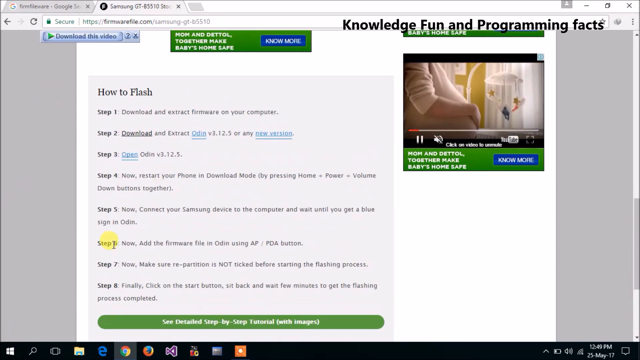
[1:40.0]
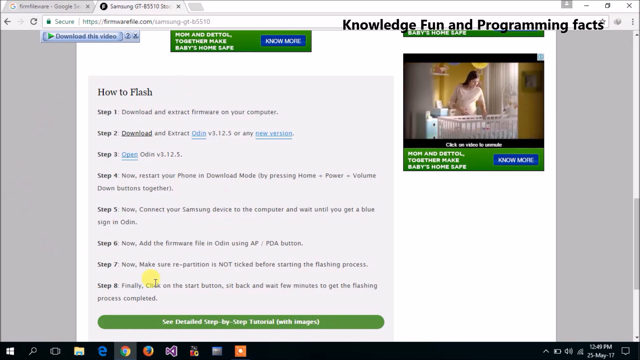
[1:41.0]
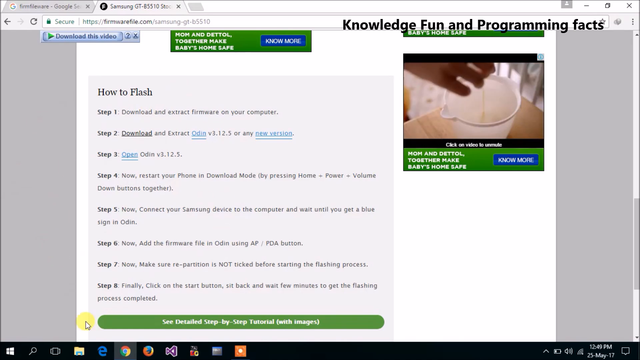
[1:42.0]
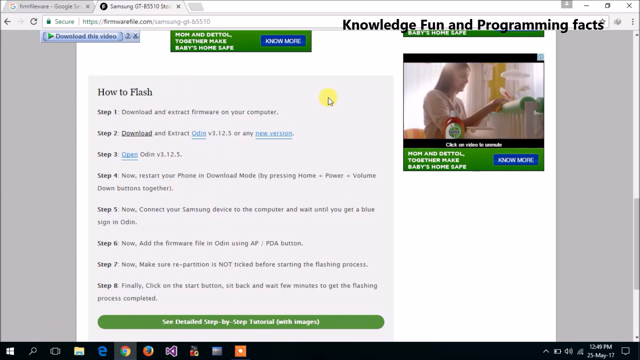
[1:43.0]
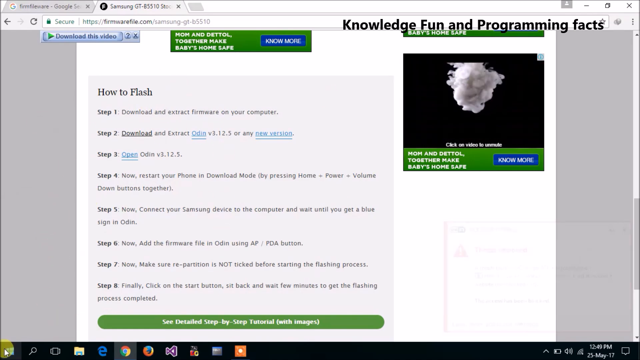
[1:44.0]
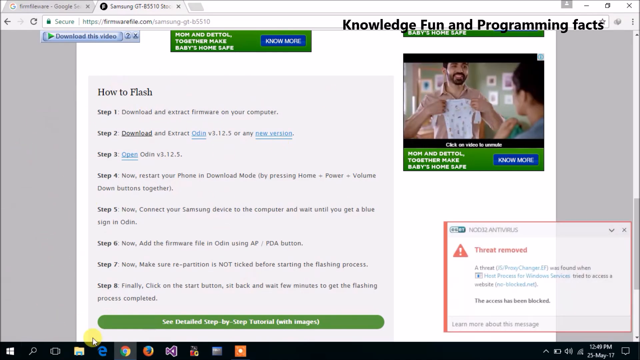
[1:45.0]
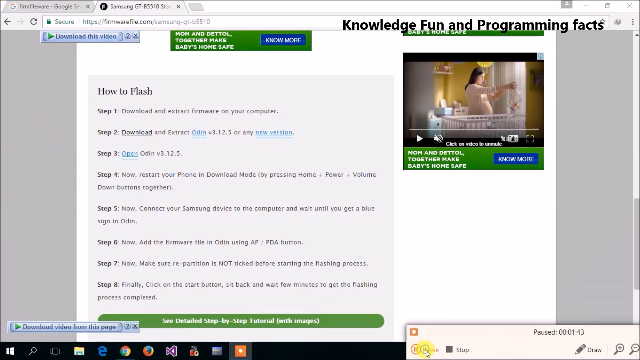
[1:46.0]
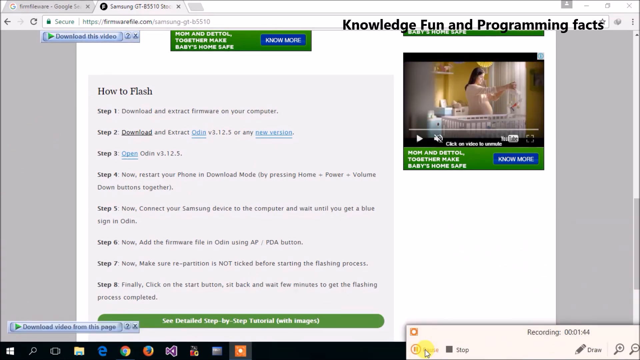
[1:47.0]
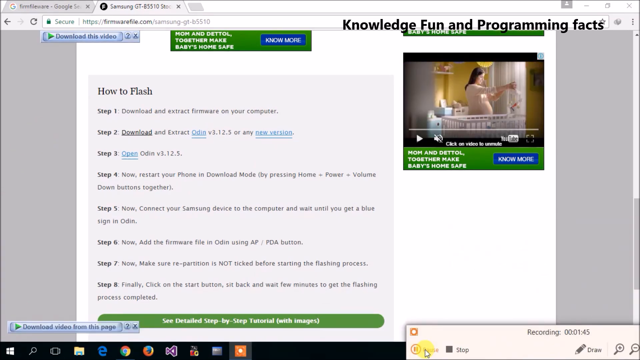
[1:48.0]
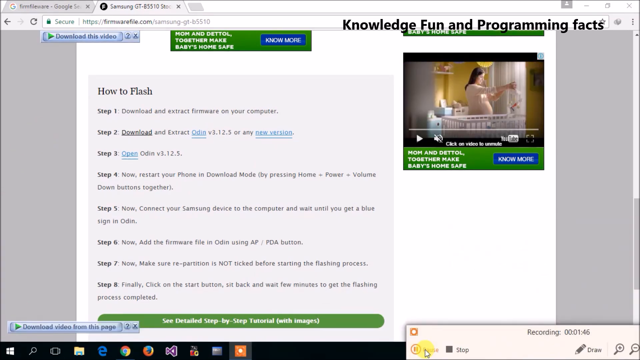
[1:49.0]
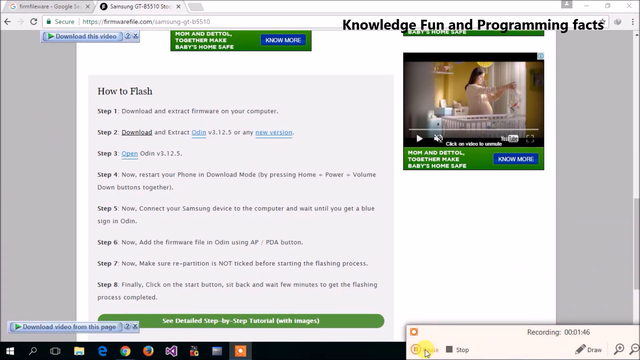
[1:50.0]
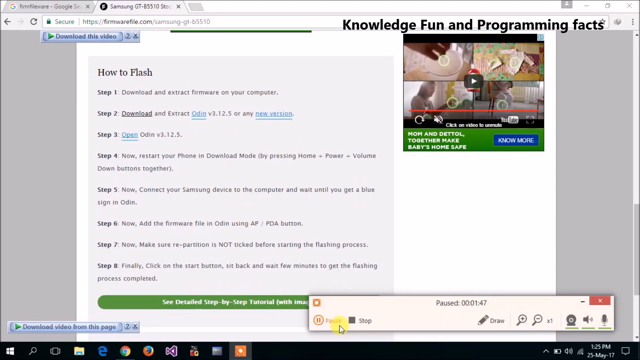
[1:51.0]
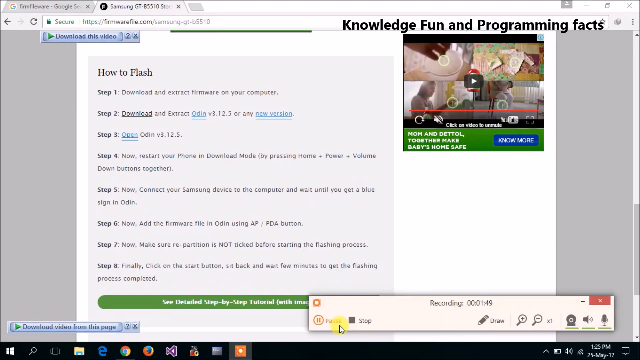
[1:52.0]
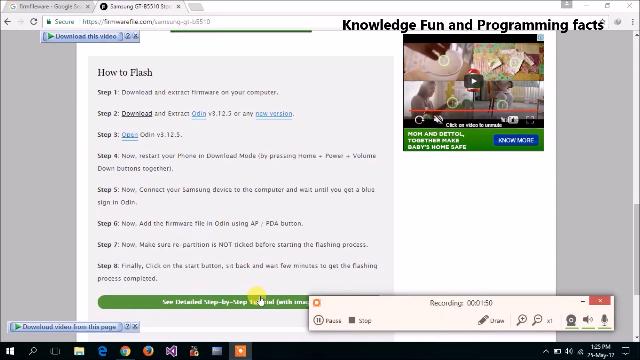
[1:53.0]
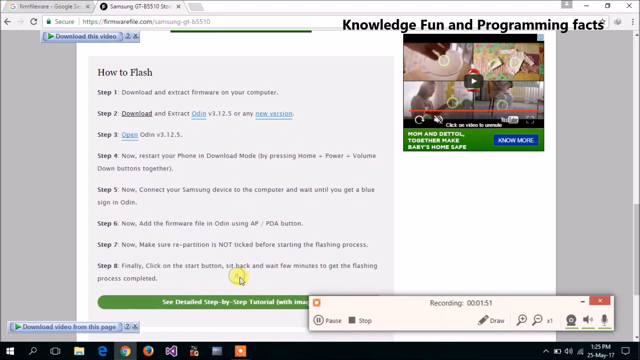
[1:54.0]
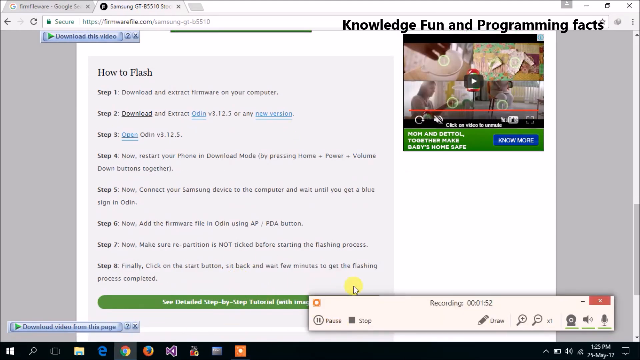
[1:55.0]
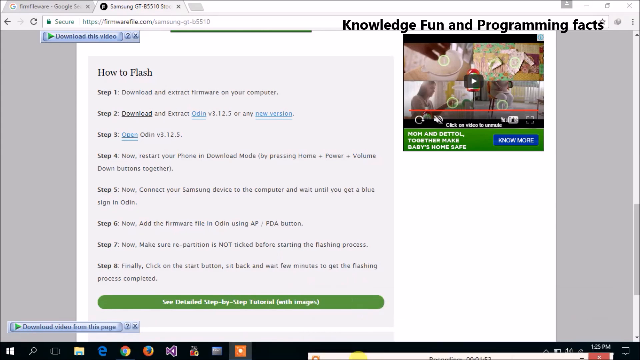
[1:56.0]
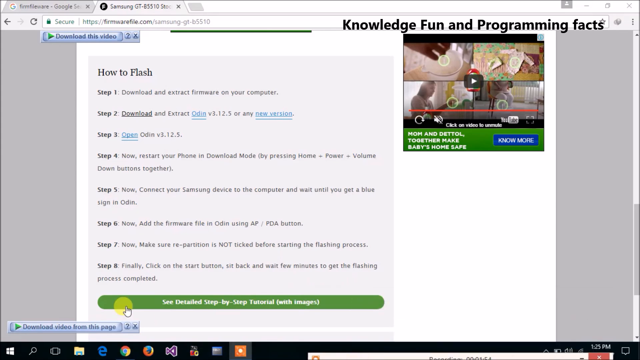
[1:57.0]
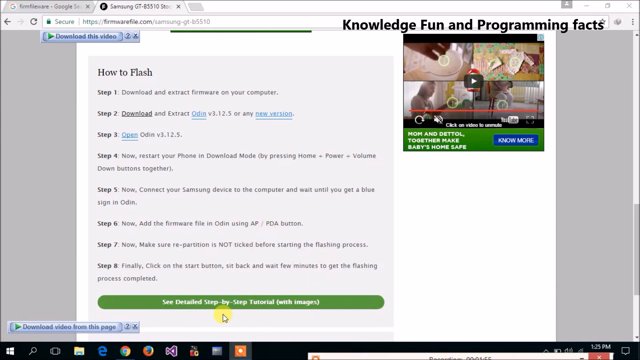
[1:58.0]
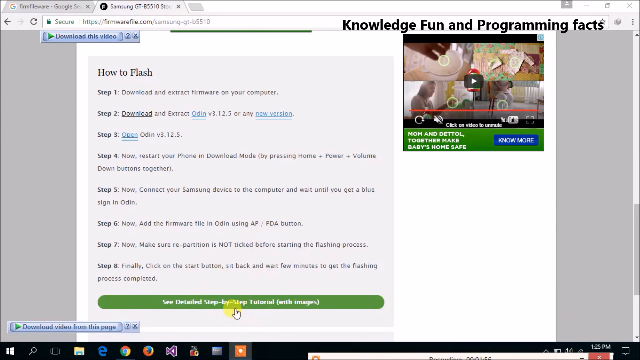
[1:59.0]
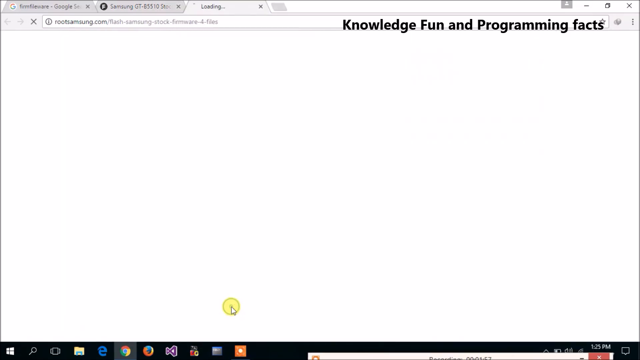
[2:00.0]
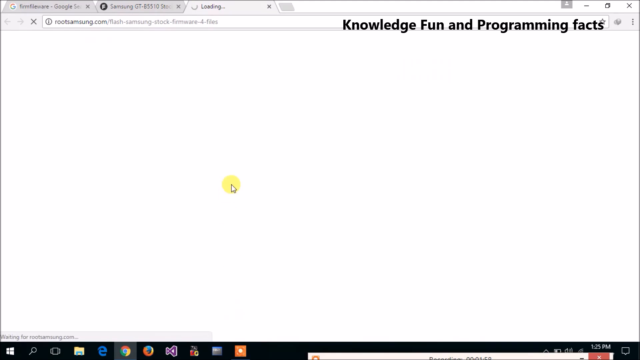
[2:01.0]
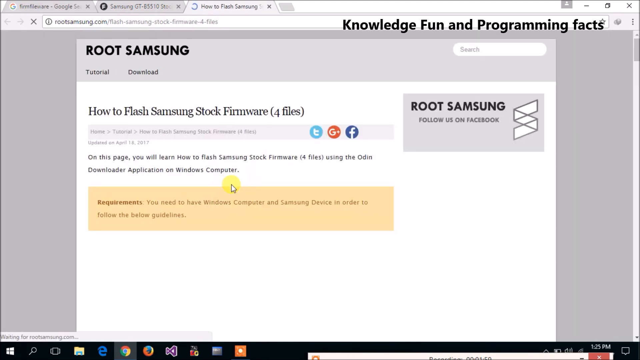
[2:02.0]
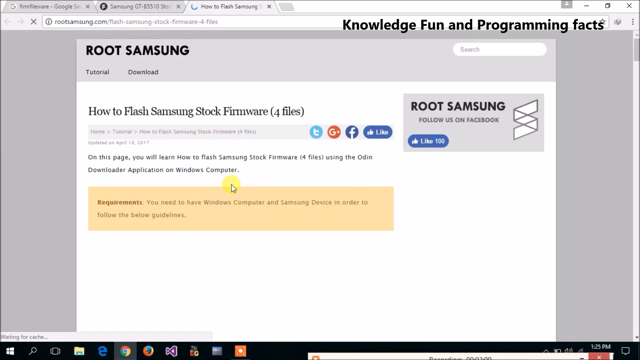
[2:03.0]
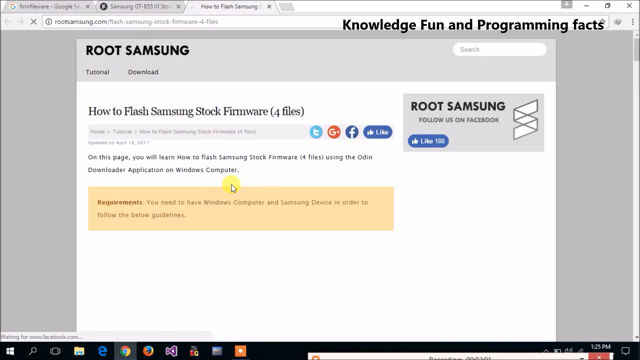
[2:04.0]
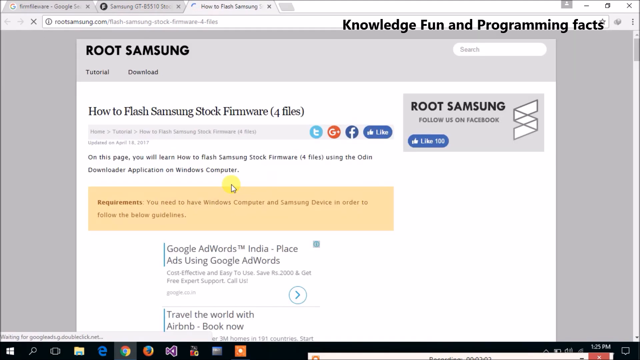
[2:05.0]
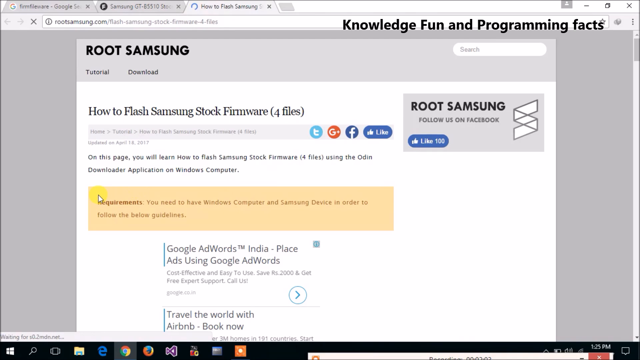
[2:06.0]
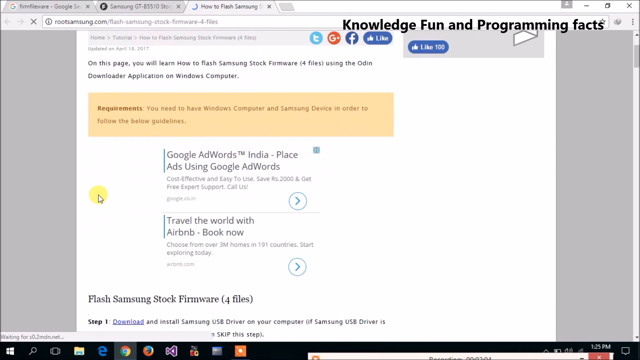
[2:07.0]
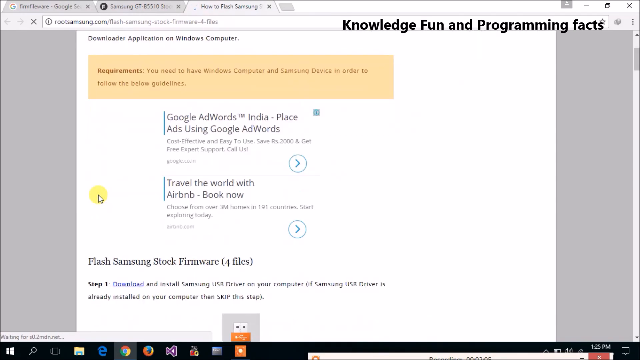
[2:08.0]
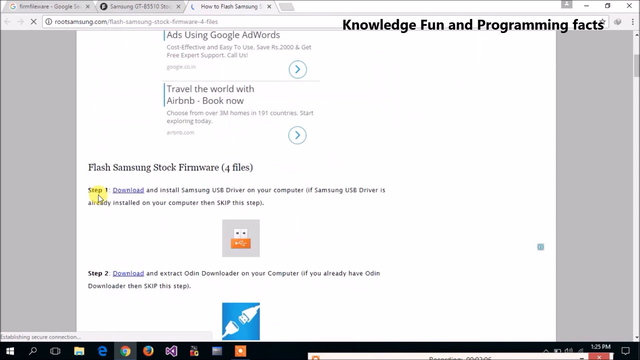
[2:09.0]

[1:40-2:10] On the How to Flash page, steps from step 1 to step 8 are shown. Underneath is a wide, narrow green button with white text reading "See Detailed Step-by-Step Tutorial (with images)". The user continues hovering the cursor around the page while a video plays on the right-hand side of the screen under the text "Knowledge Fun and Programming Facts." At the bottom right of the screen is what looks like a screen recording in progress. The user keeps moving the cursor around and then tries to move the recording icon out of view toward the bottom of the screen. They appear to click the button at the bottom of the screen, which leads to a page titled Root Samsung, with the text "How to Flash Samsung Stock Firmware (4 Files)" underneath. At the bottom of the screen, some text on Google AdWords(TM) India appears. The user continues scrolling down the page.